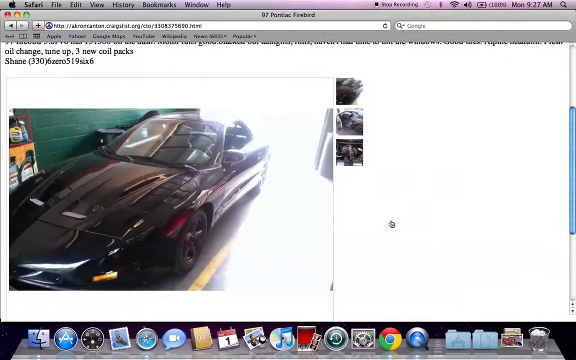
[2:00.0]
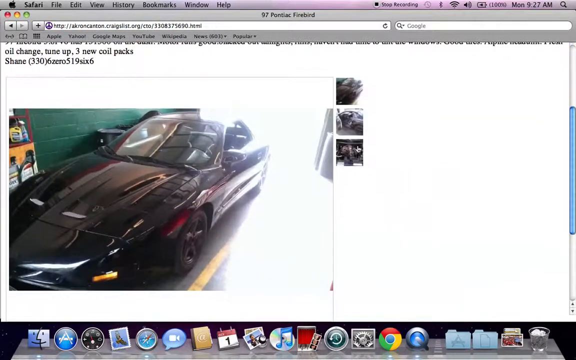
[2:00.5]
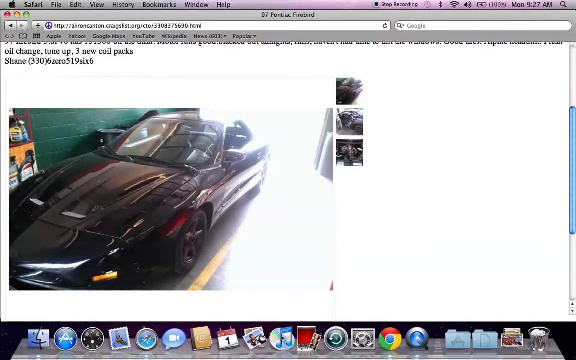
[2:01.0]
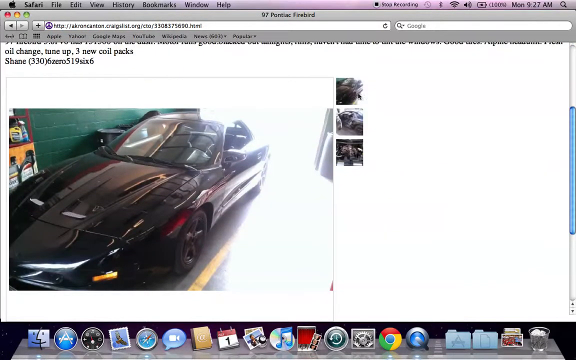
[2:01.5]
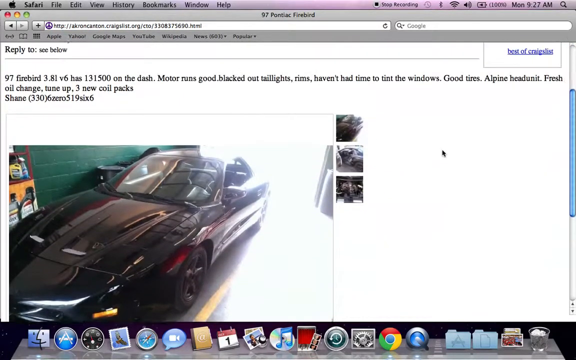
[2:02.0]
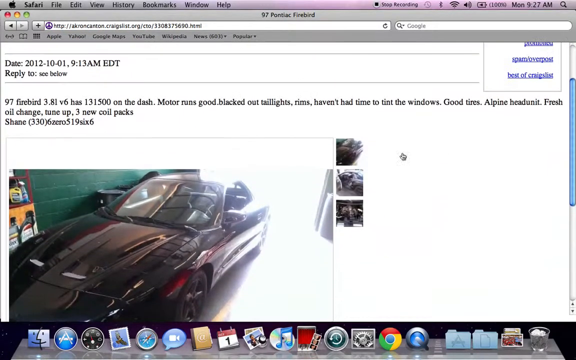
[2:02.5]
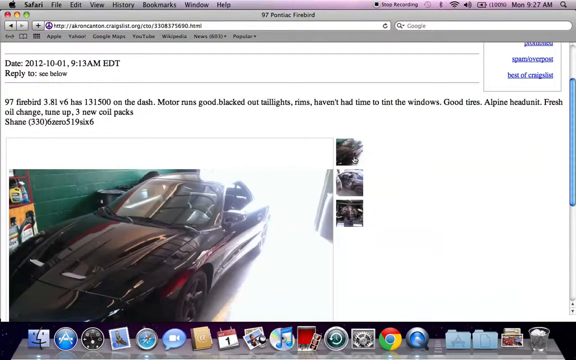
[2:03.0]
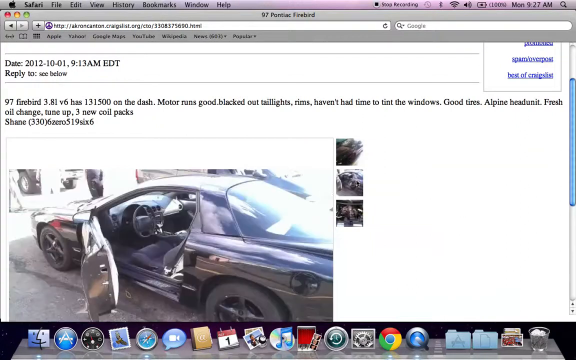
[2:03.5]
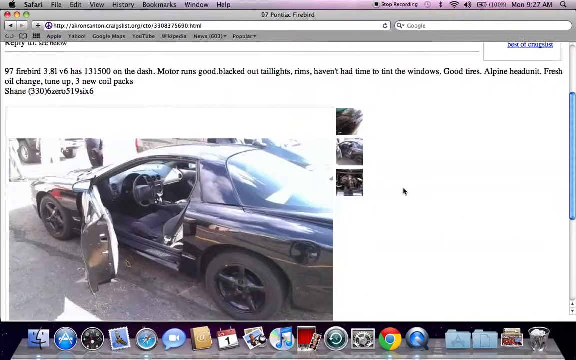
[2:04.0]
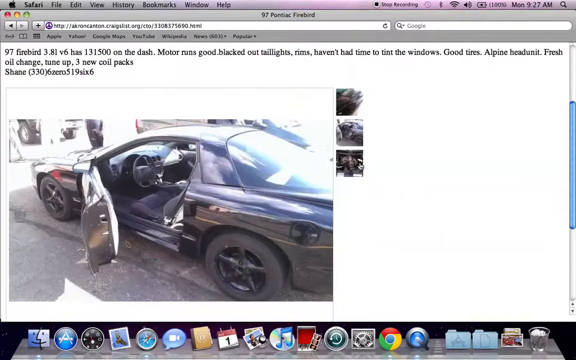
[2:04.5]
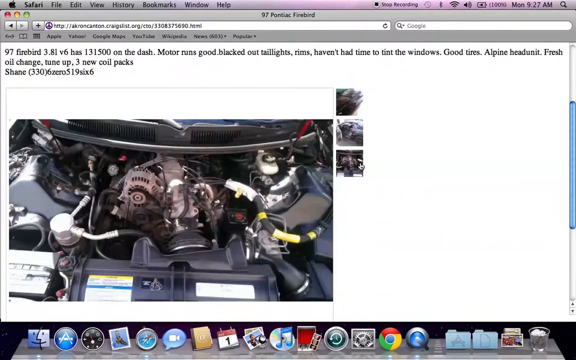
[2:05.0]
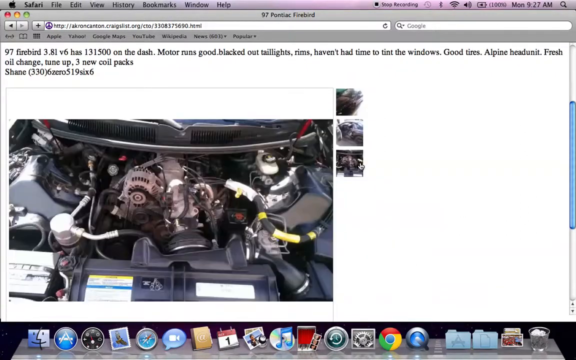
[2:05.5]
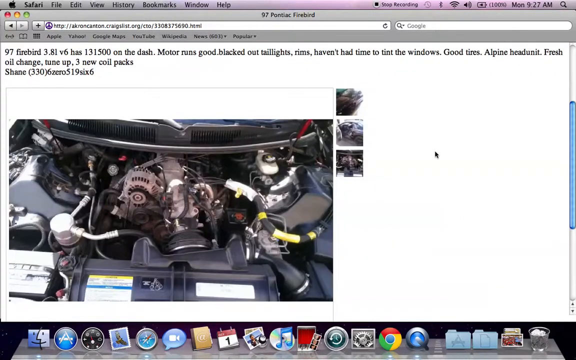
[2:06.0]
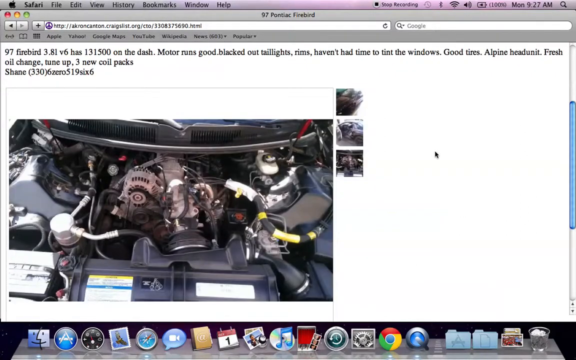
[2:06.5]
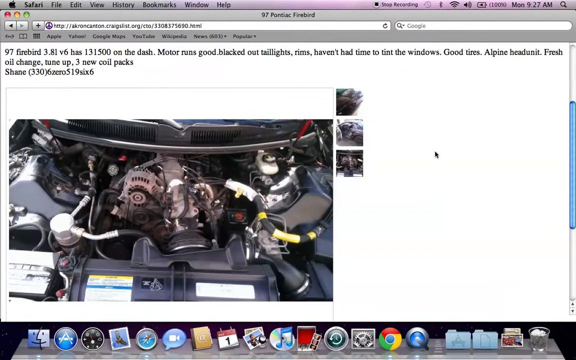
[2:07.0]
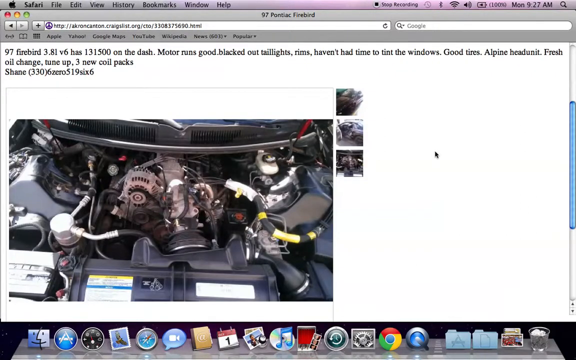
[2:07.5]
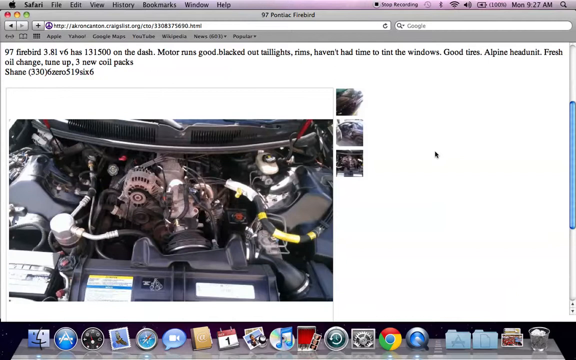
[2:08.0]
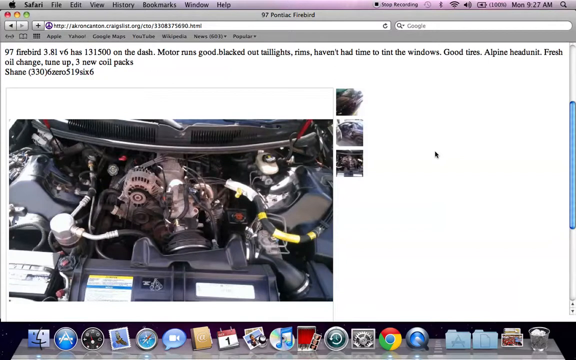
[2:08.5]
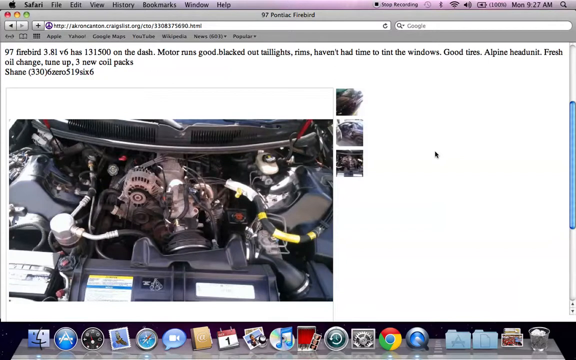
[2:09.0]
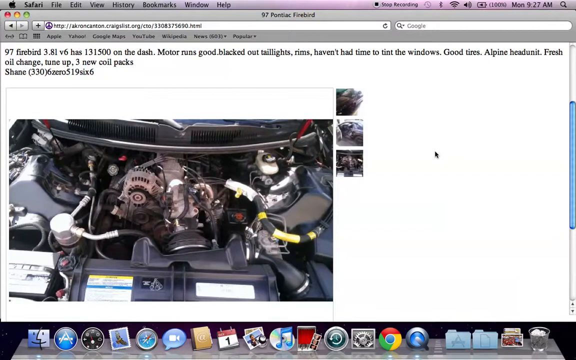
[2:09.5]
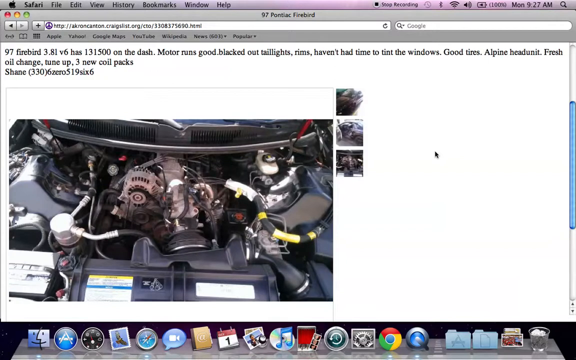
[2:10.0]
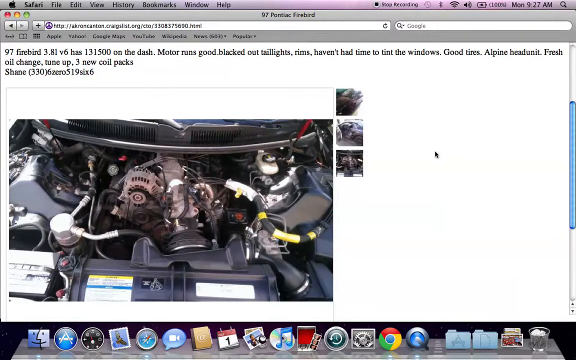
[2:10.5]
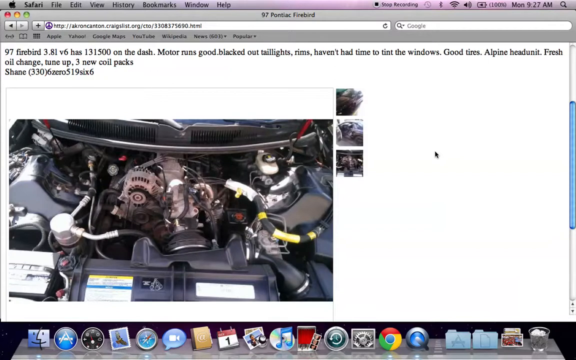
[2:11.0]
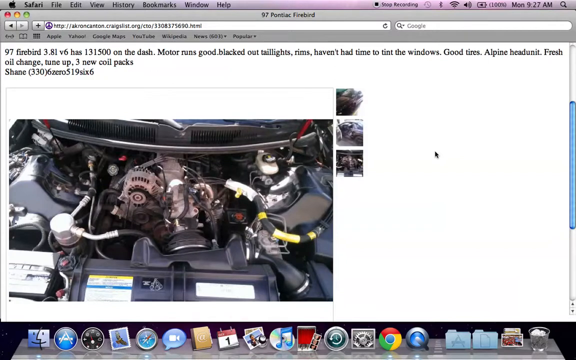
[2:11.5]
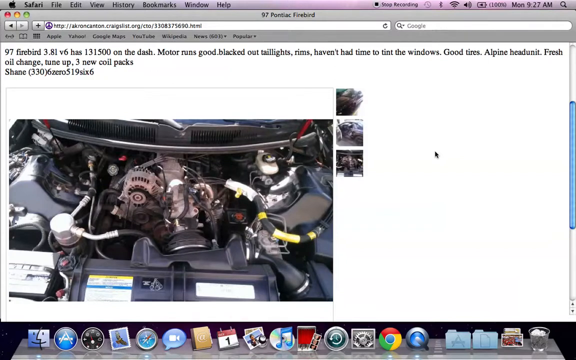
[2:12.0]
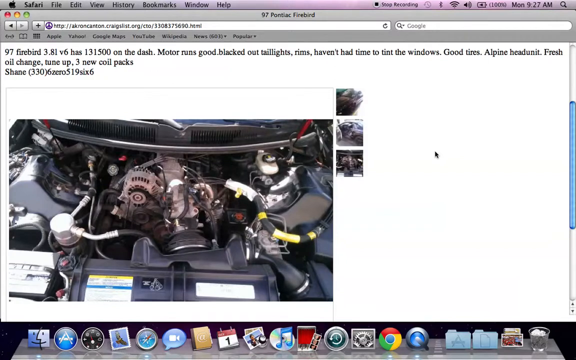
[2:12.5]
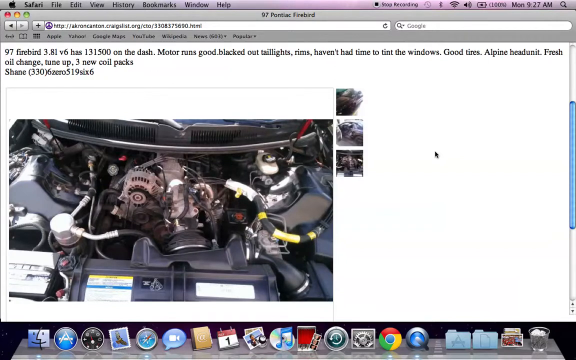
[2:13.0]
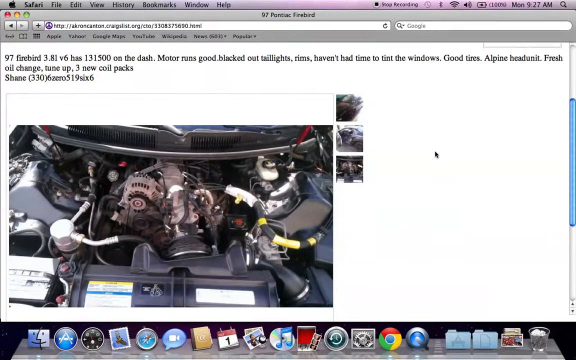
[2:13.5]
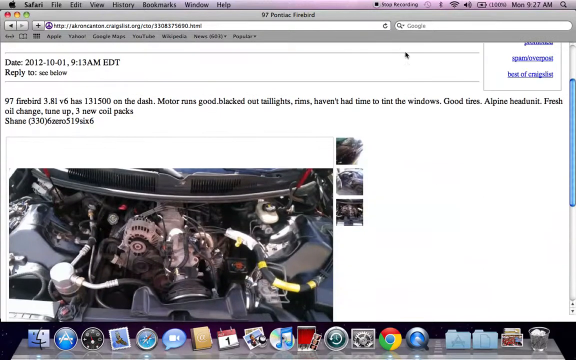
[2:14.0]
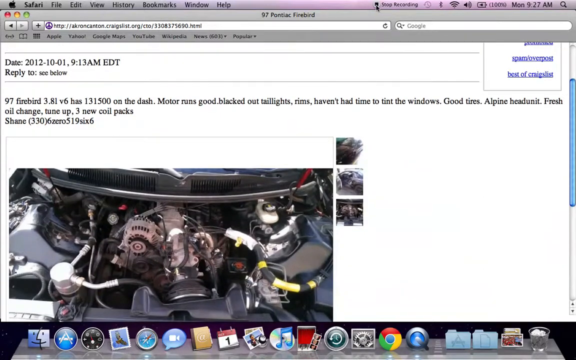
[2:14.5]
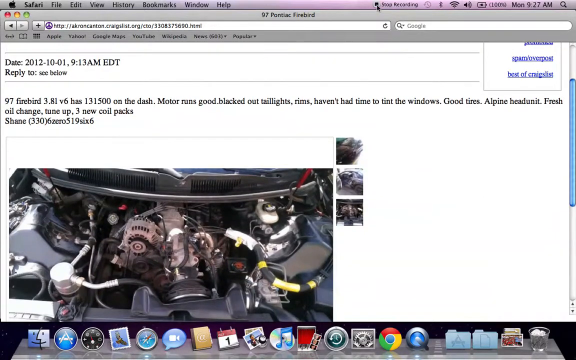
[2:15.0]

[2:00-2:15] Someone's desktop or laptop screen shows a Craigslist listing. The most noticeable thing is a picture of the car, down on the lower left, taking up a little more than half the width of the screen. The car is very shiny black and looks like it is reflecting something red. Above it is a very short description that reads "97 Firebird, 3.81 V6, has 131500 on the dash, motor runs good, blacked out taillights, rims, haven't had time to tint the windows, good tires, Alpine head unit, fresh oil change, tune up three new coil packs", followed by "Shane" and "(330)" and a phone number that mixes numerals and spelled-out words: 6, "zero", 5, 1, 9, "six", 6. The picture switches to a side view of the car with the driver's side door open, then to a picture of the motor, which looks very clean. Finally, the mouse cursor goes up to the very top of the visible screen and clicks "stop recording".